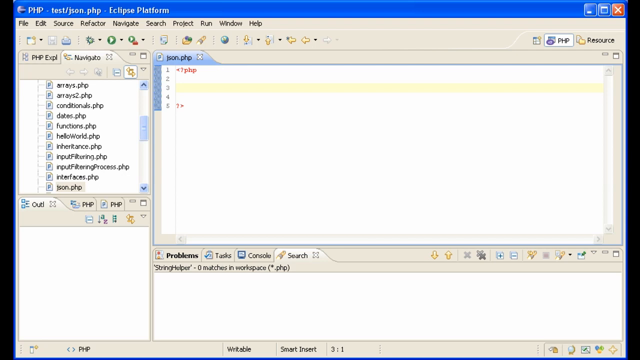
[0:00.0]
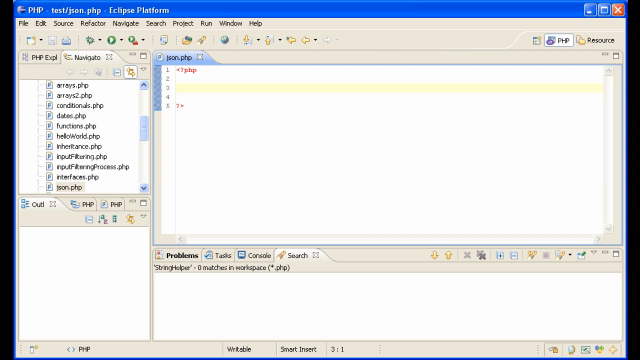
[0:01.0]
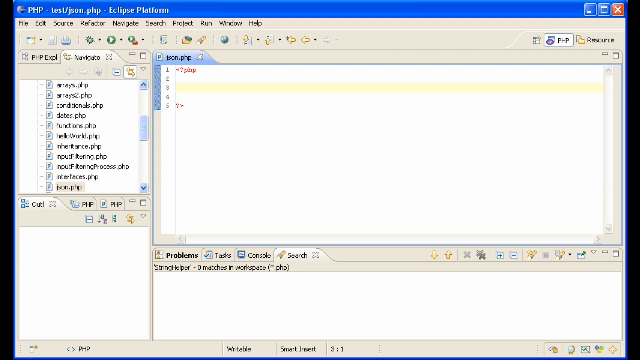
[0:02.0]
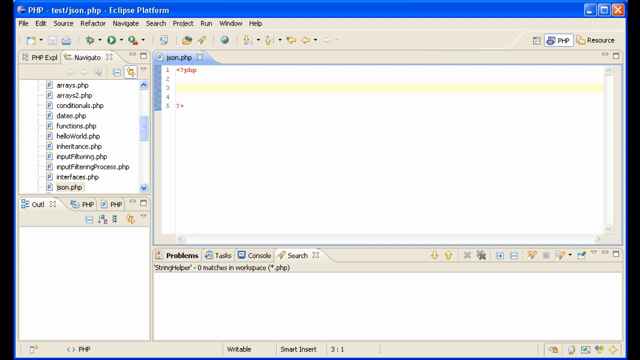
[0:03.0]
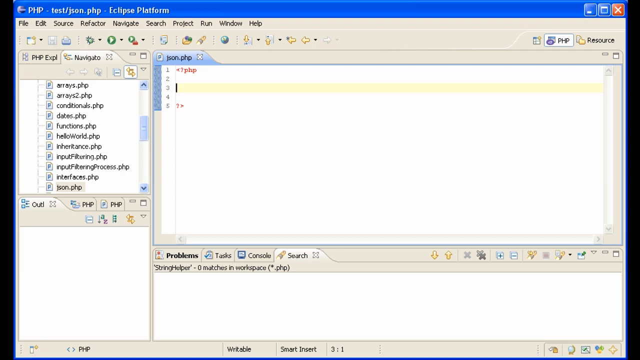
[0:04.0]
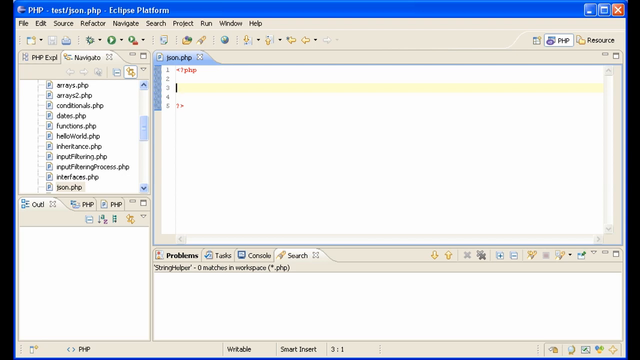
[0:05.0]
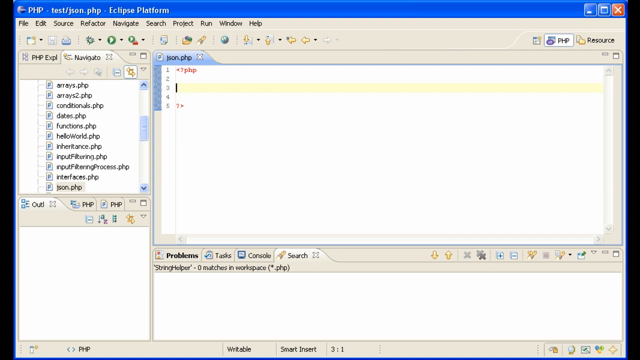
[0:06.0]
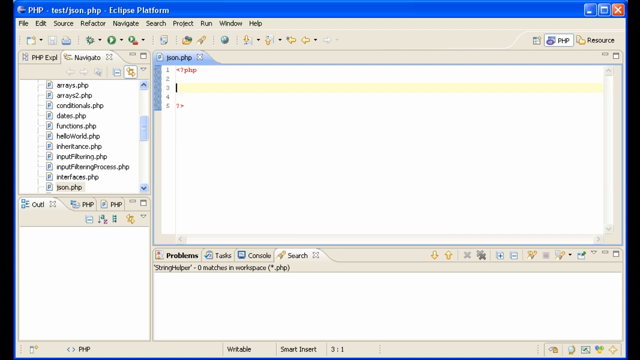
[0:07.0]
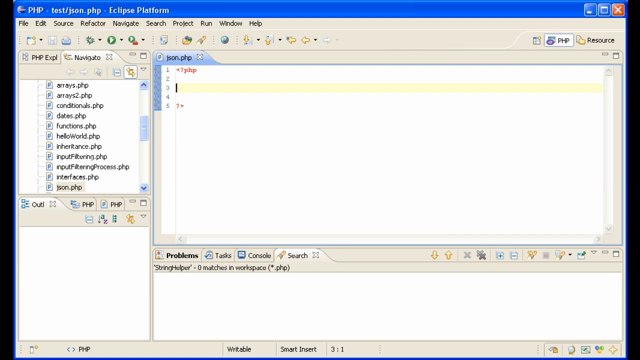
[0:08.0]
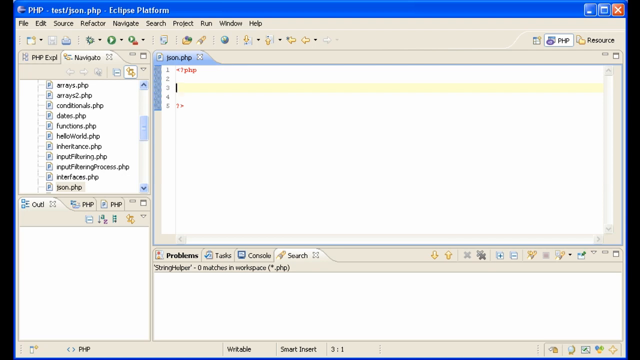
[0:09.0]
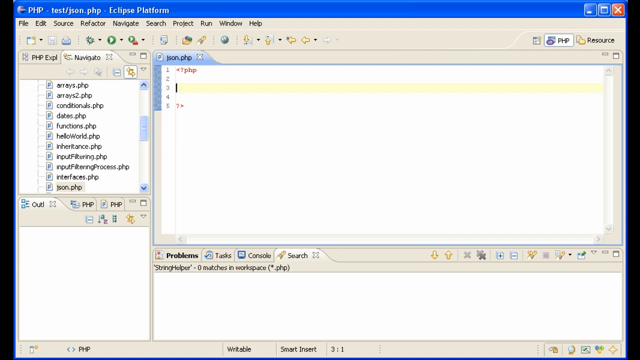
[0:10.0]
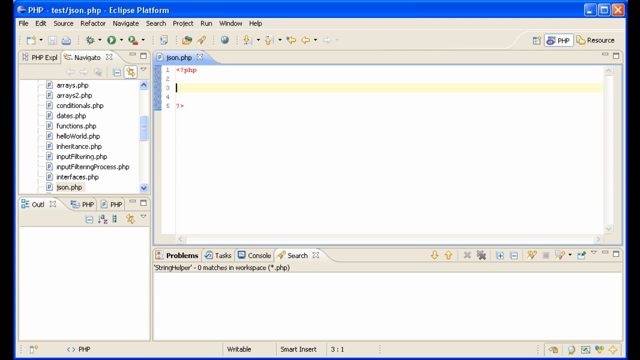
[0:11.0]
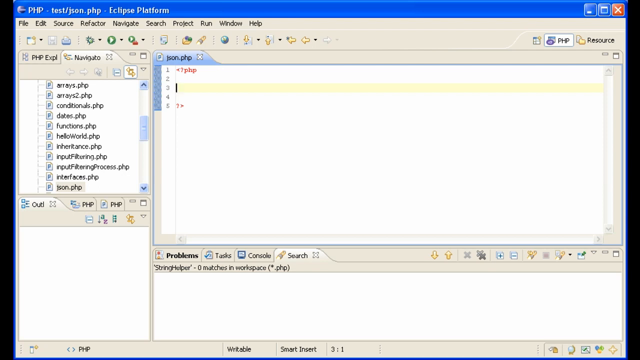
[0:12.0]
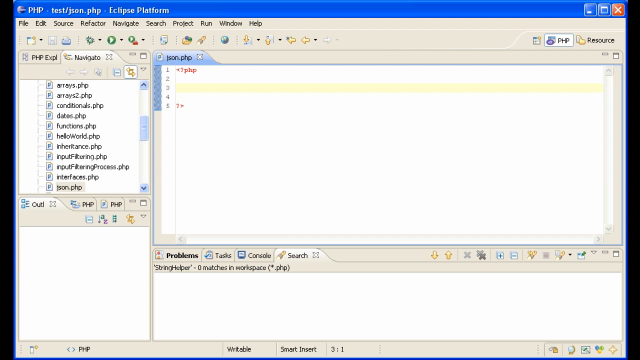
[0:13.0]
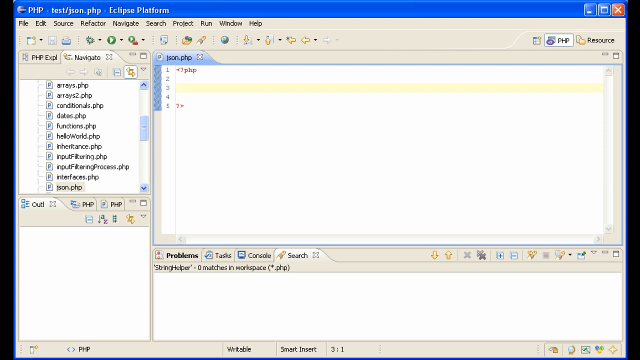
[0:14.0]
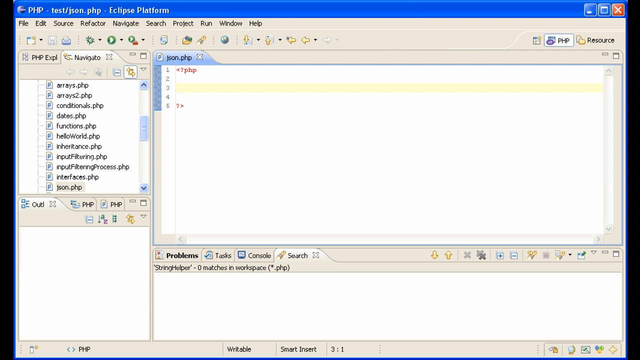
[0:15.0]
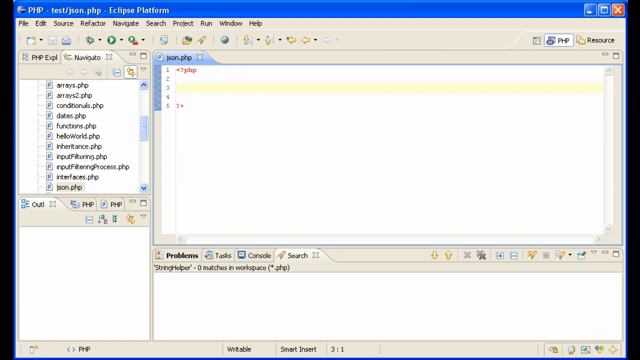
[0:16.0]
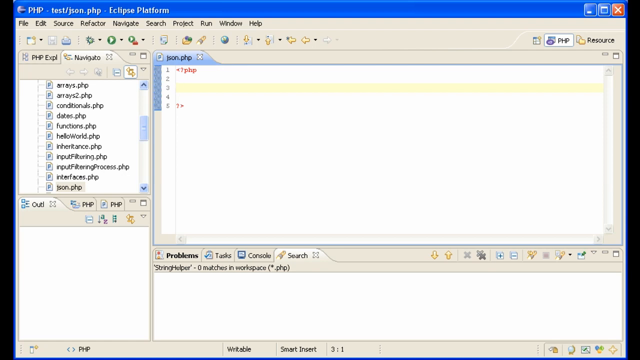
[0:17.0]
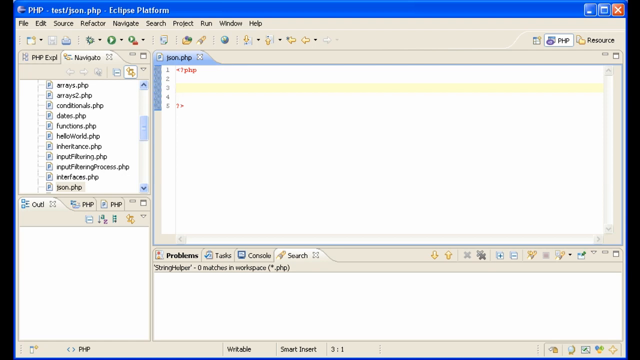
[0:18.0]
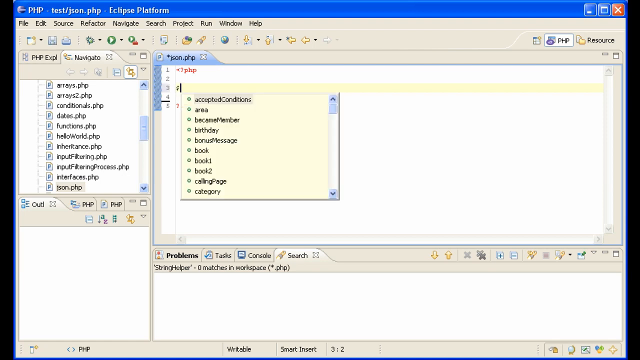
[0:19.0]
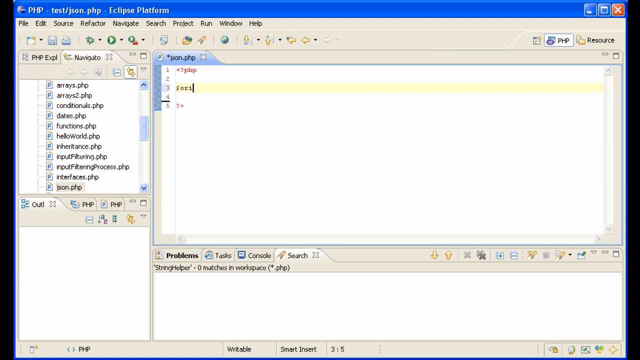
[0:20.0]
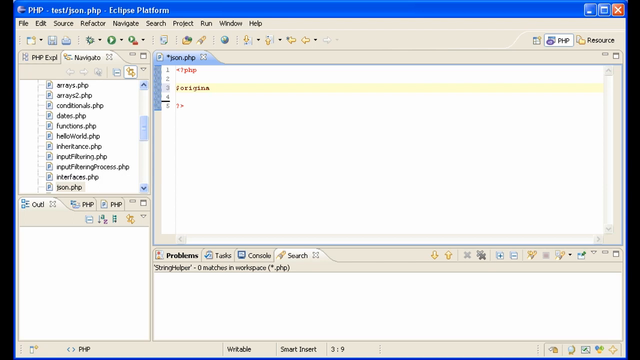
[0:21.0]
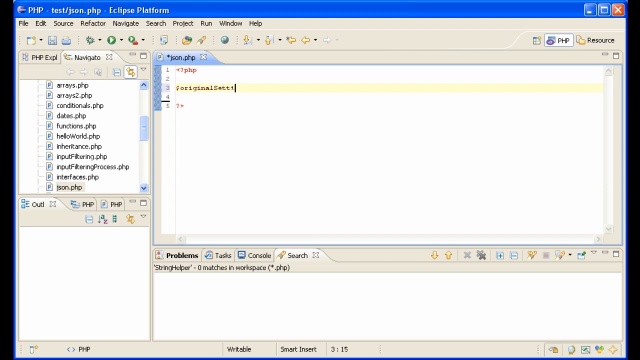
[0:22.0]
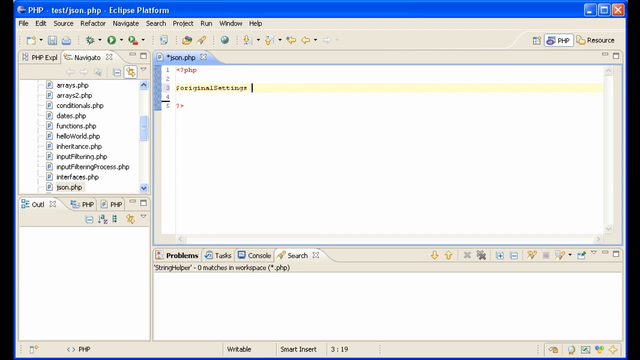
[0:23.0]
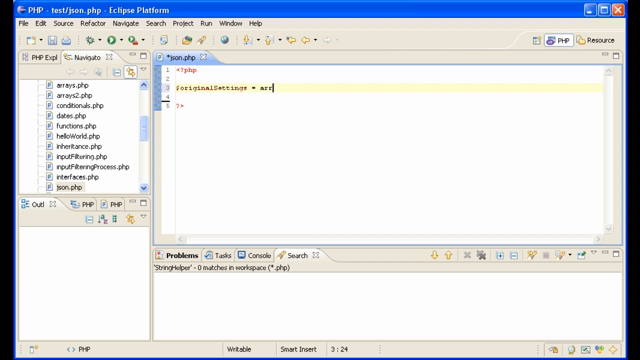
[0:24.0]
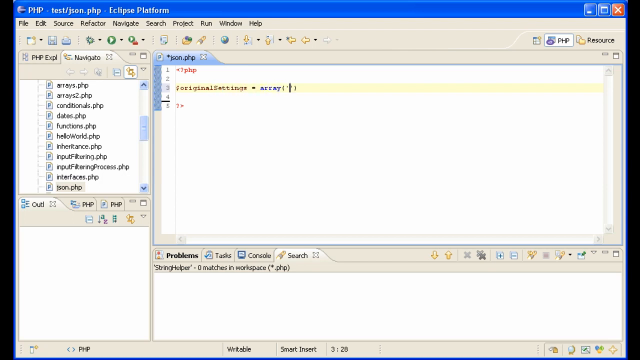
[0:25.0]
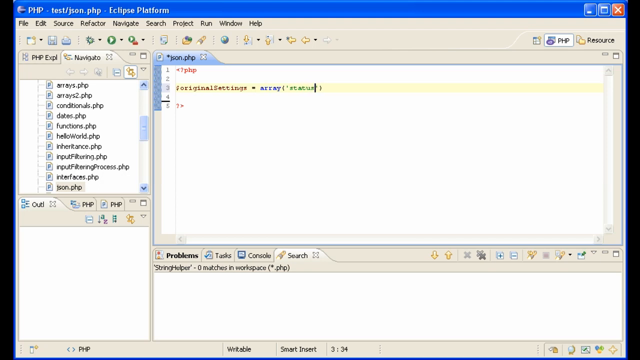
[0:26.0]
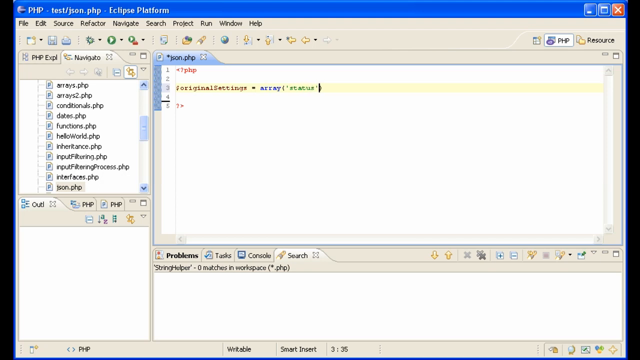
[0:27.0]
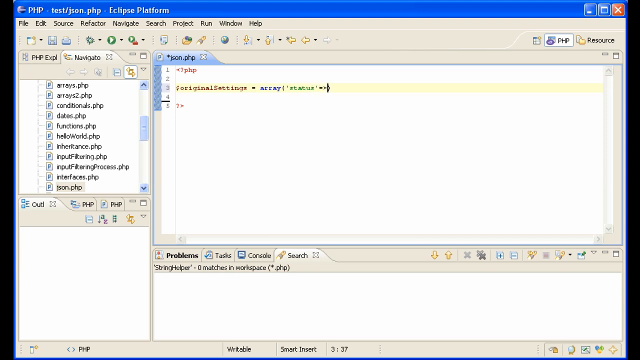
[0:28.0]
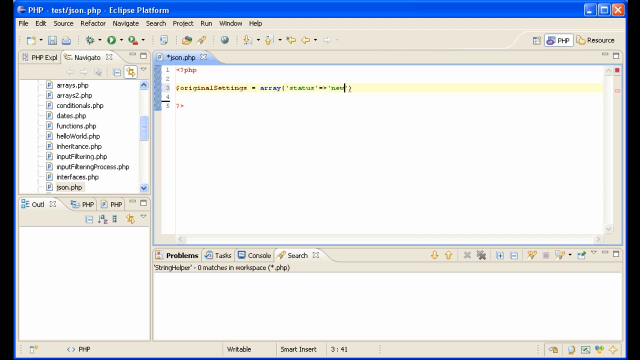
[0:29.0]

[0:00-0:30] A computer program is shown on what appears to be a Windows XP platform. At the top left of the screen, text reads "PHP - test/json.php -Eclipse Platform," so the program seems to be Eclipse Platform. On the left side of the program is a list of PHP files, and on the right, taking up about three quarters of the program, is a blank page titled json.php with five lines numbered one through five. The first line has a < followed by possibly a number or some icon and php, and the fifth line has a ?>. The mouse cursor blinks on the third line, which is highlighted in yellow, and then typing begins. A symbol appears to be typed, and the words "originalsettings = array('status'" are typed on that highlighted third line.